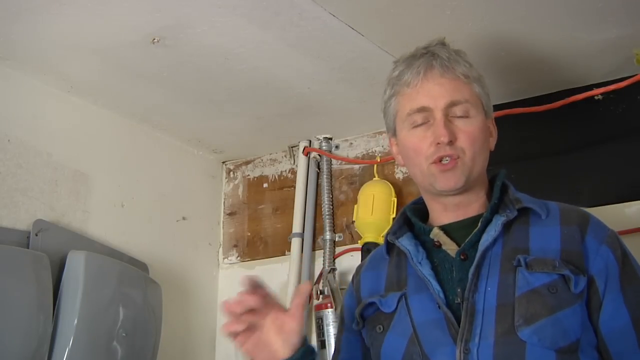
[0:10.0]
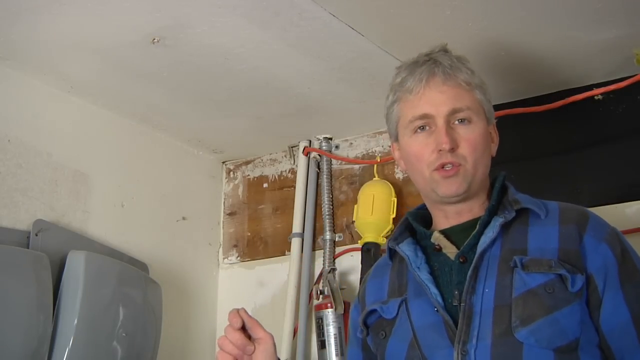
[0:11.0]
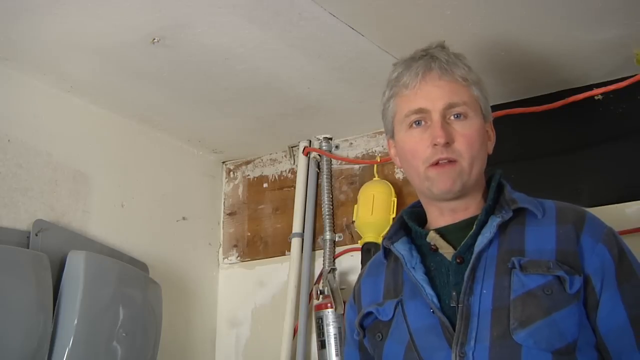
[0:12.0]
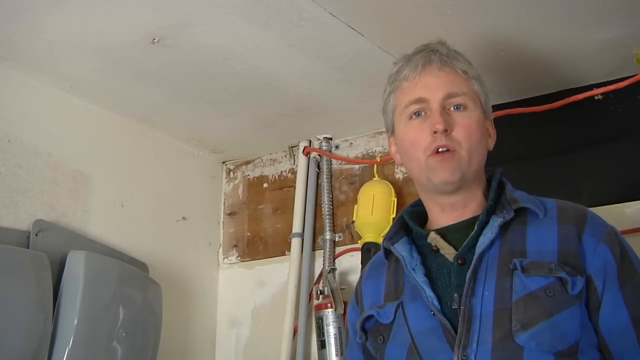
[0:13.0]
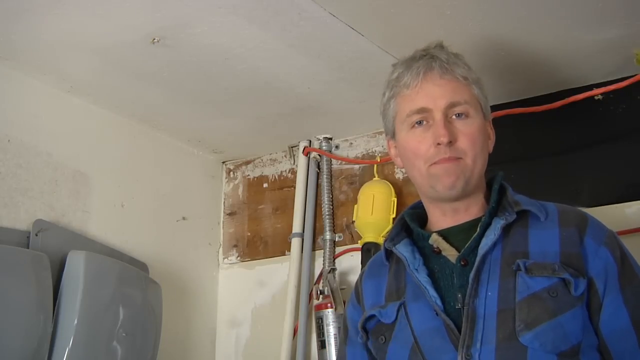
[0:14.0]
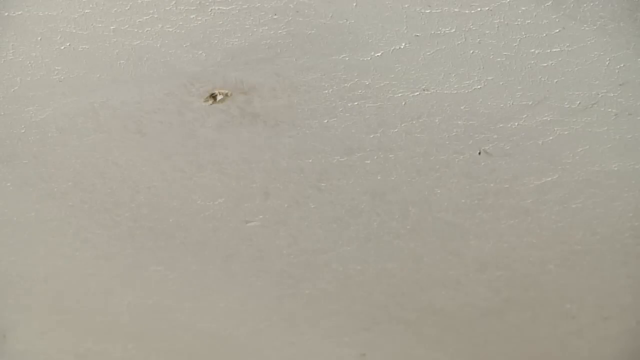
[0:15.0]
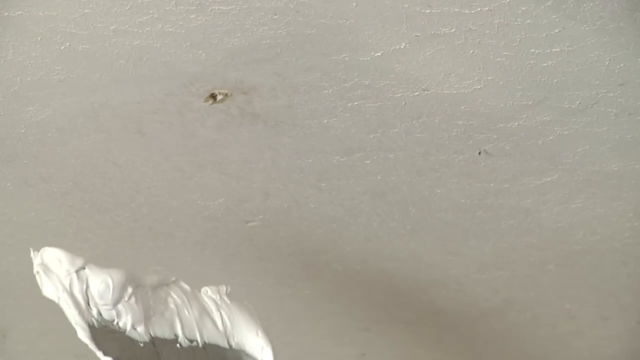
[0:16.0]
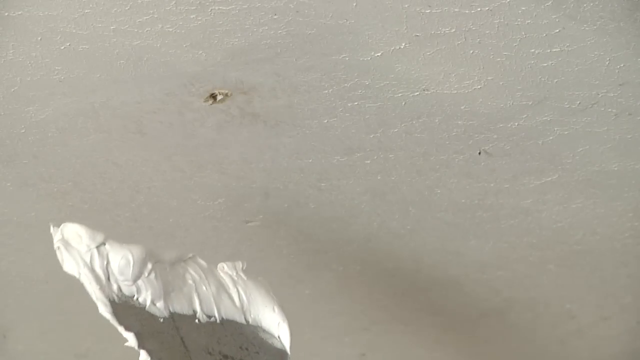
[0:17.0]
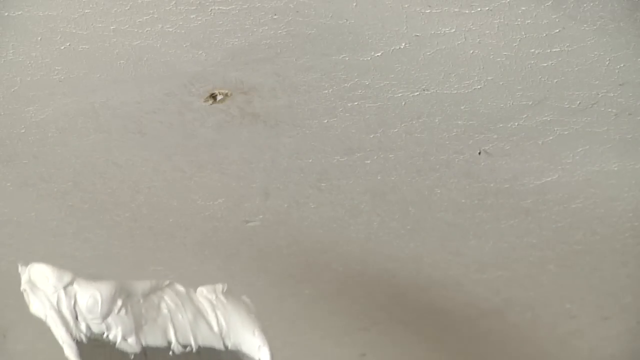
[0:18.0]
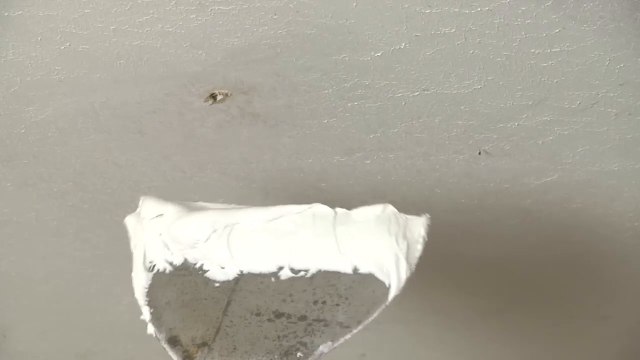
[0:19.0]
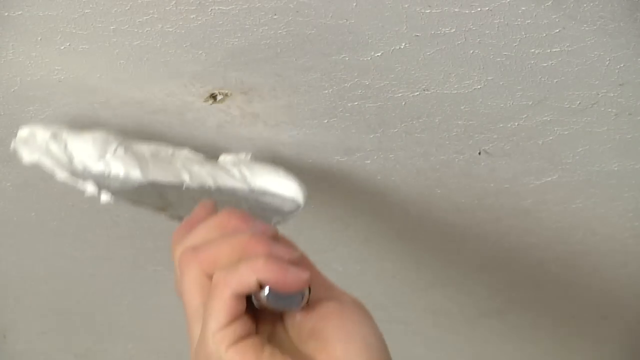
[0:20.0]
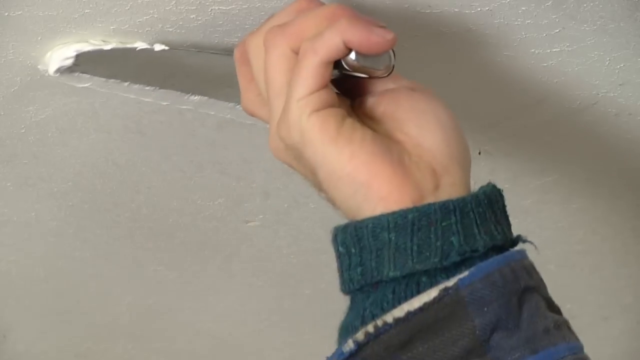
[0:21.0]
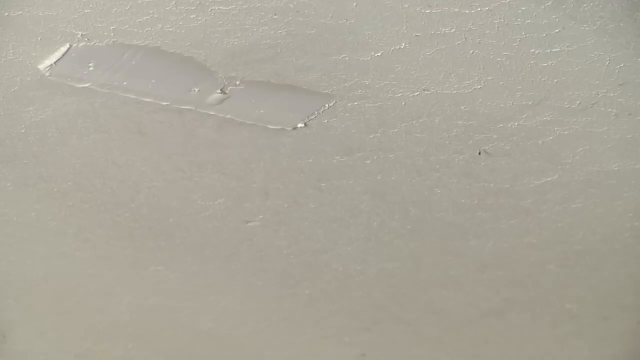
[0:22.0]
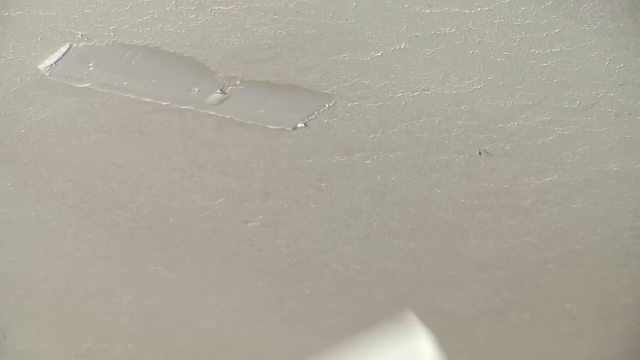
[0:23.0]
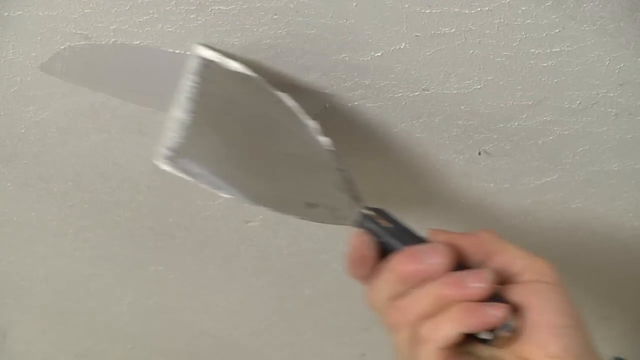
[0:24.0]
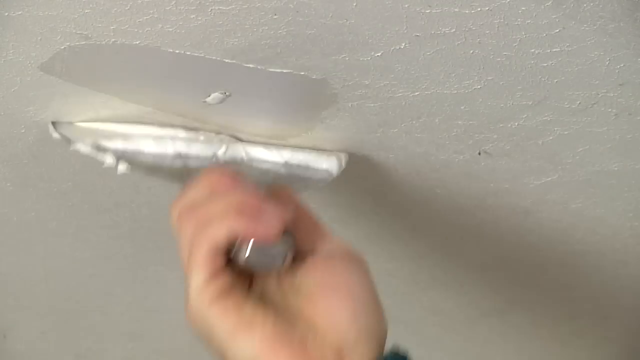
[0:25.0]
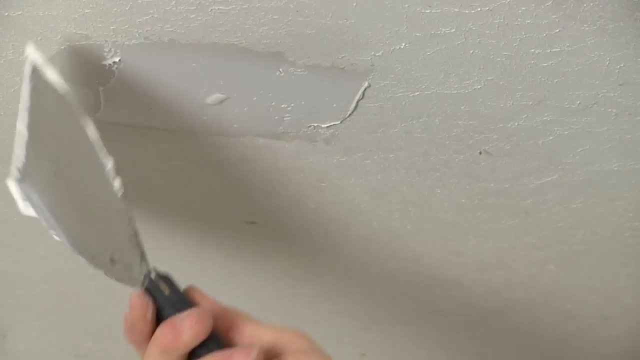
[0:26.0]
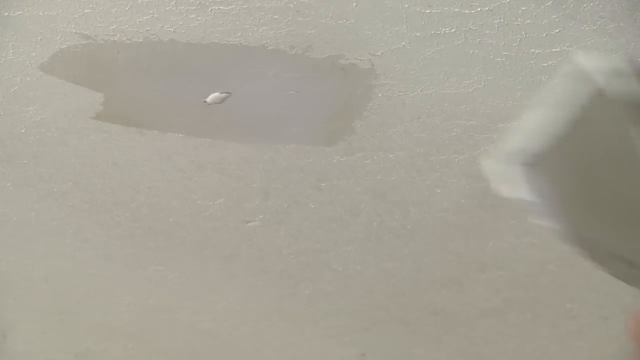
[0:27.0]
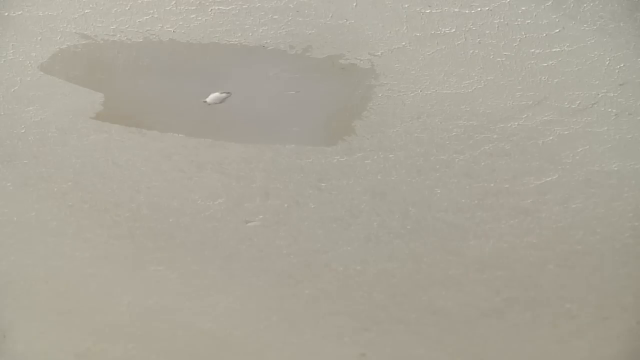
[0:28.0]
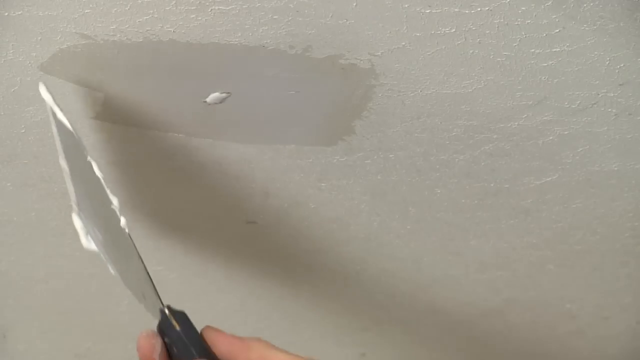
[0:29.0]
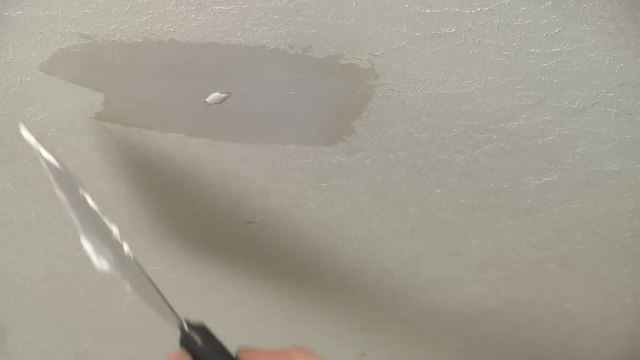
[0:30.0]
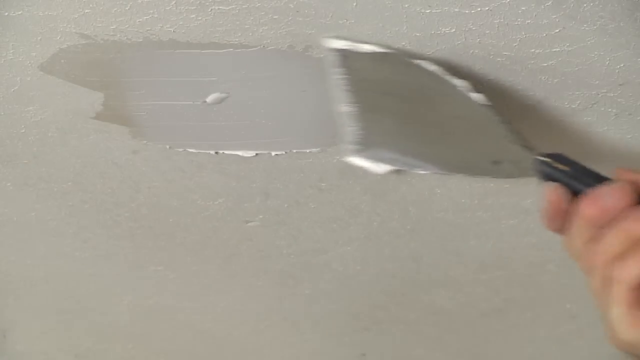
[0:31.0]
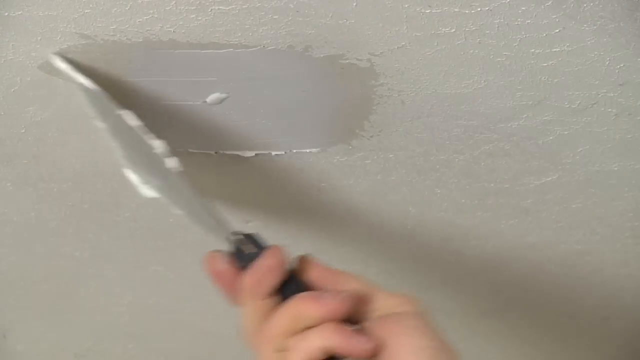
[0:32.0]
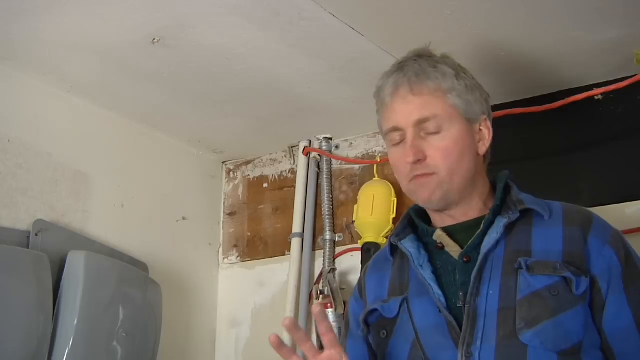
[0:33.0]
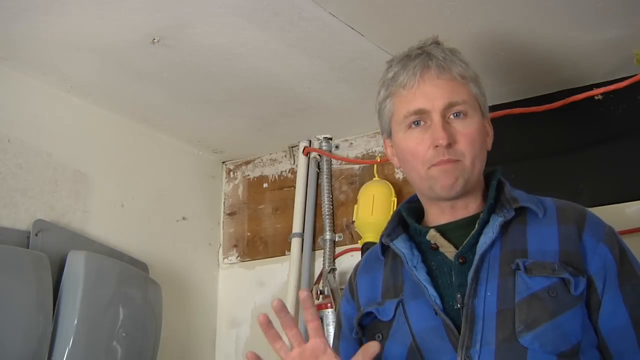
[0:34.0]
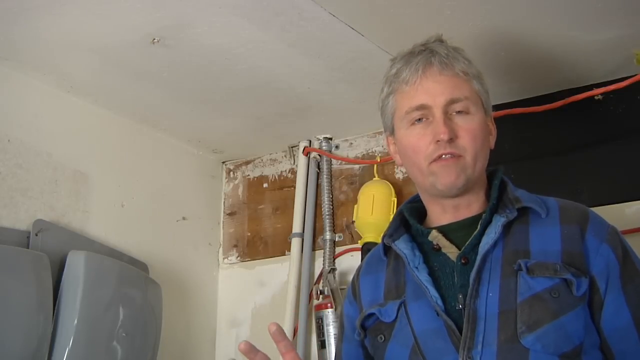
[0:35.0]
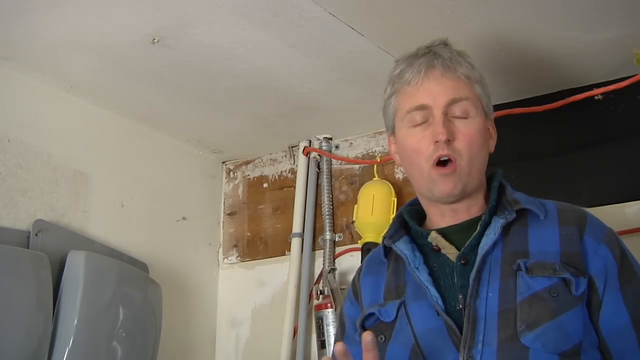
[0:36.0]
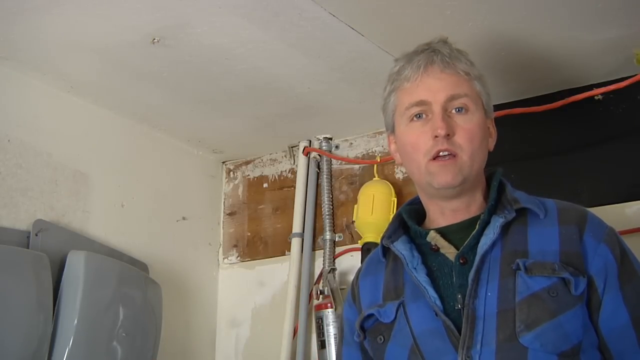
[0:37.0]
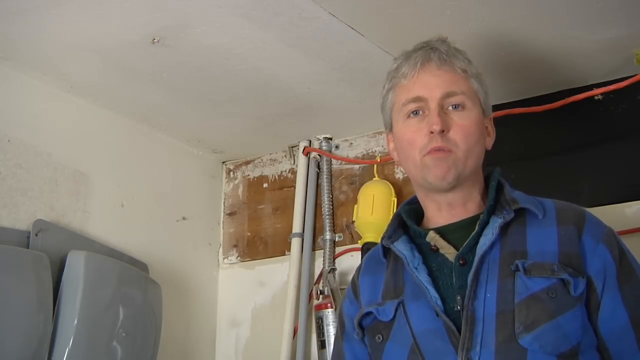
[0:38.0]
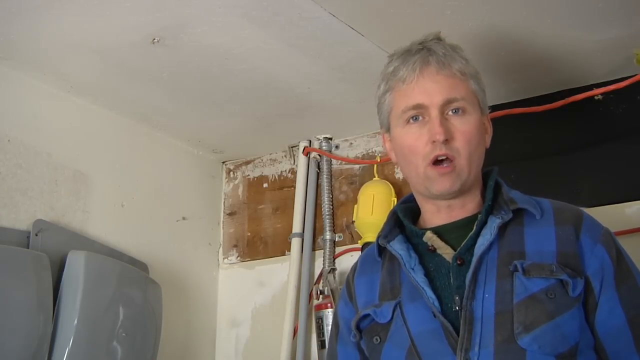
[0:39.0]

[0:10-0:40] Chris continues to talk. Behind him, the upper portion of the wall is wooden, and the portion behind him nearest the right of the frame appears to be covered with some black or dark gray material. Tubing, perhaps fittings for electrical lines, goes down from small holes in the ceiling toward the middle of the frame behind Chris. An orange wire, perhaps an outdoor extension cord, extends across the frame from the middle outward to the right, running from the pipe on the right of the frame to what appears to be some type of gray plastic materials lined up against the wall furthest to the left. A yellow portable construction light or flashlight is temporarily hooked onto the cord. The shot cuts to the ceiling, where he appears to have spackle on a trowel, ready to rub over the drywall screw hole. He applies a moderate amount of spackle over the vicinity of the hole, smearing it on in a smooth motion, then smooths it over the hole so it is flat, repeating this approximately three times. Chris is then seen talking again.